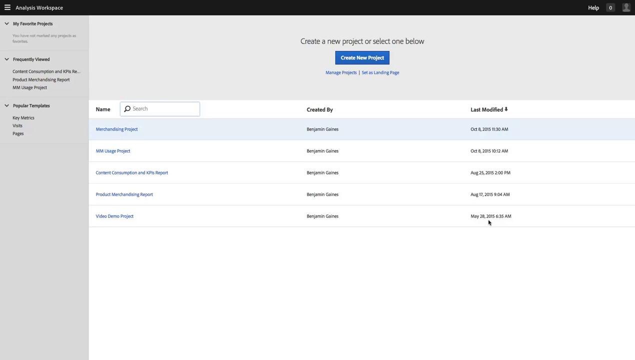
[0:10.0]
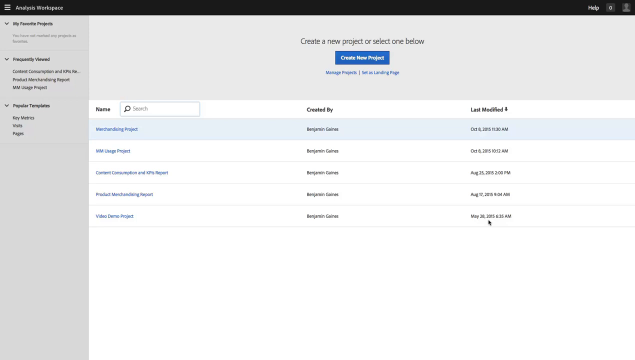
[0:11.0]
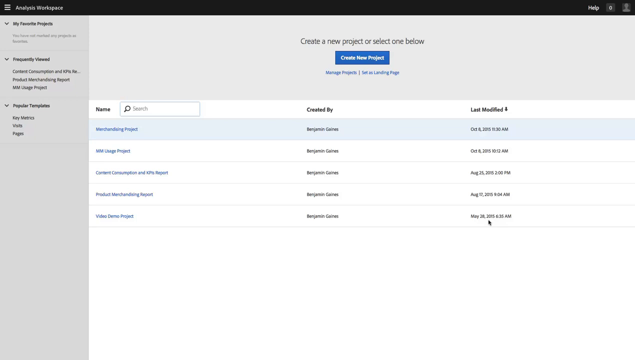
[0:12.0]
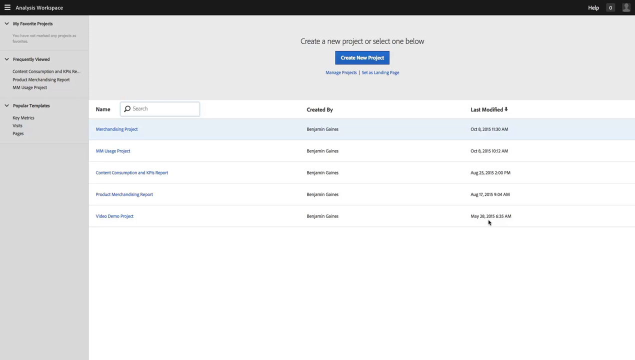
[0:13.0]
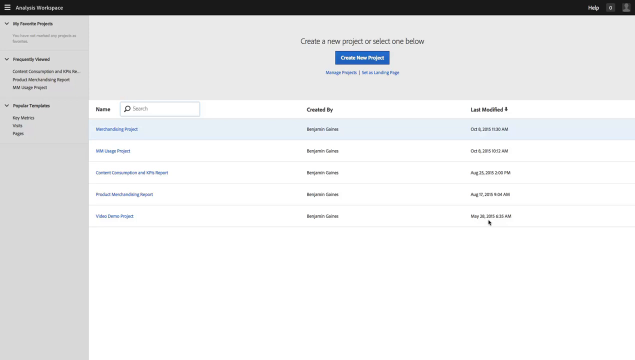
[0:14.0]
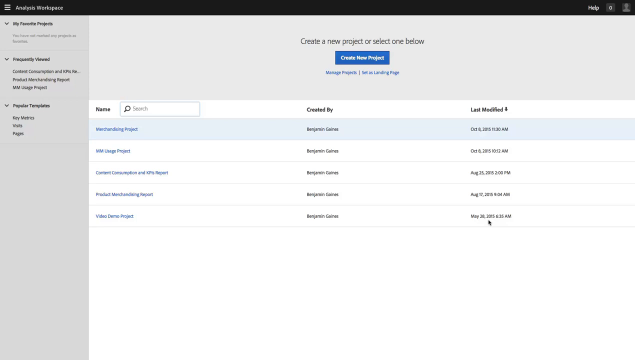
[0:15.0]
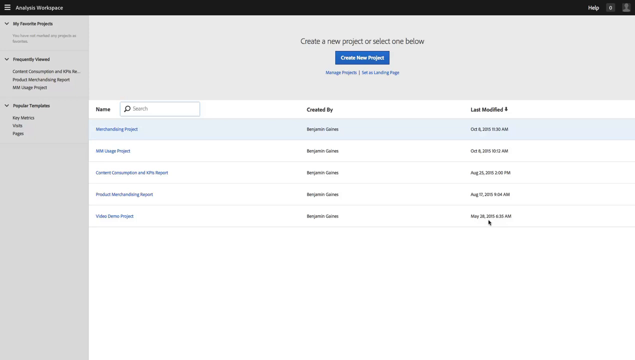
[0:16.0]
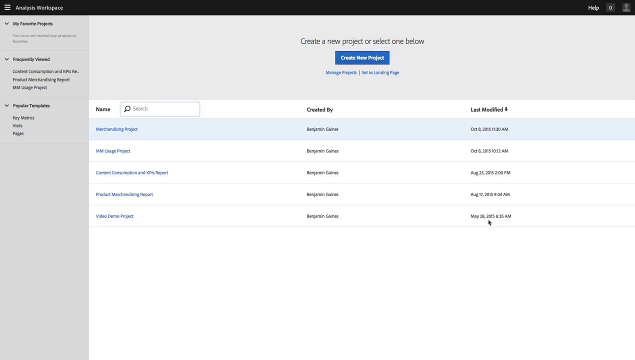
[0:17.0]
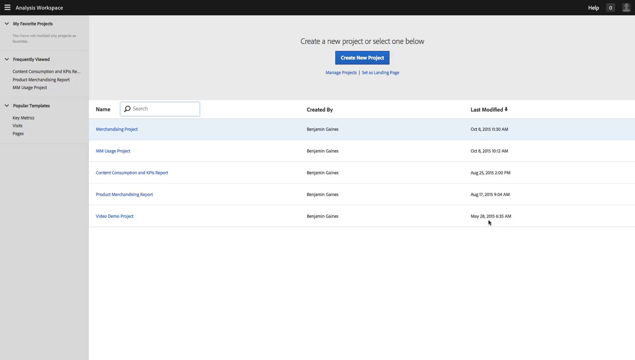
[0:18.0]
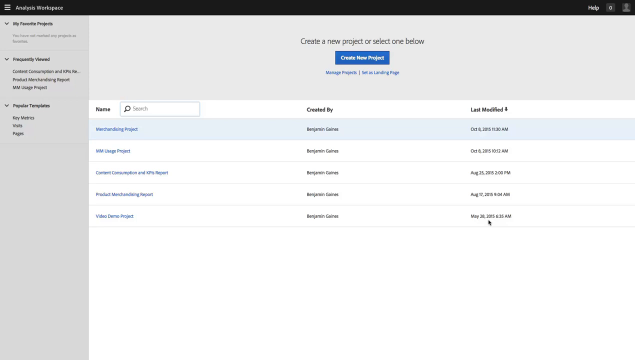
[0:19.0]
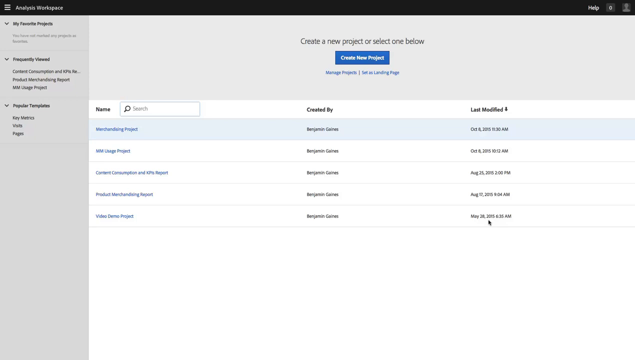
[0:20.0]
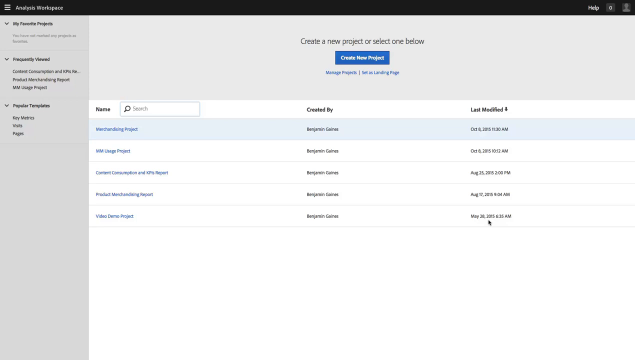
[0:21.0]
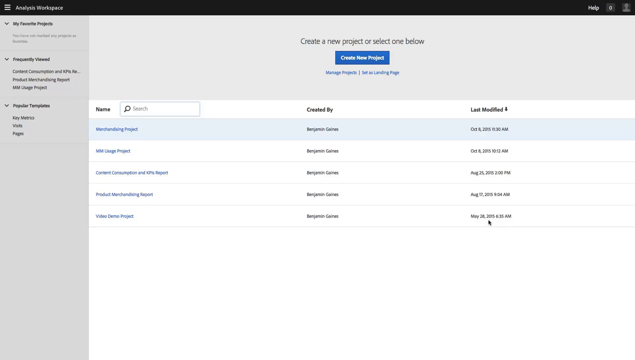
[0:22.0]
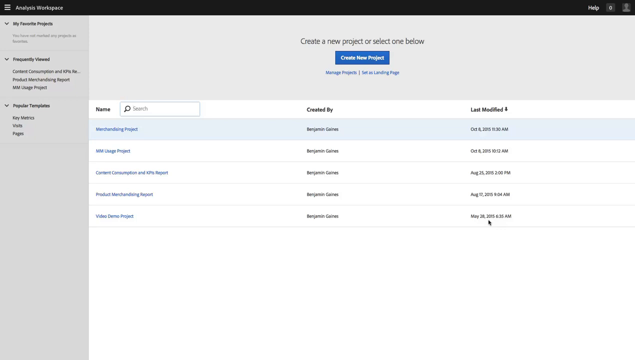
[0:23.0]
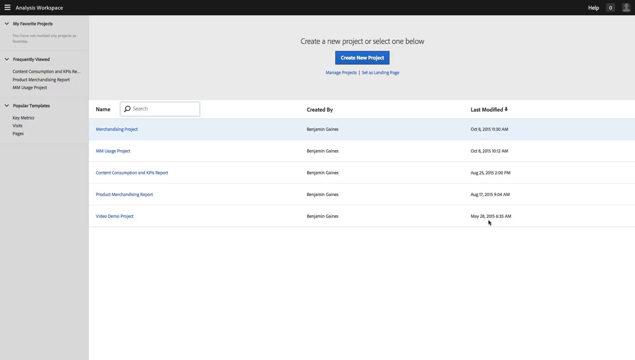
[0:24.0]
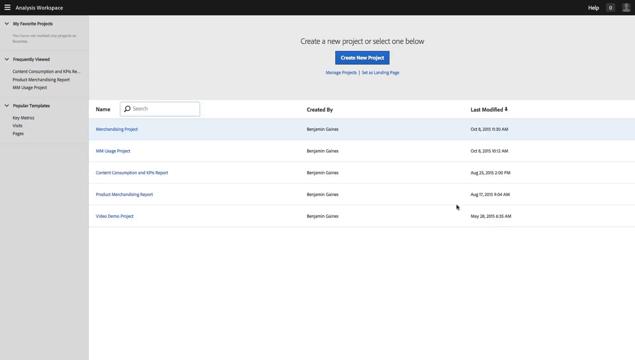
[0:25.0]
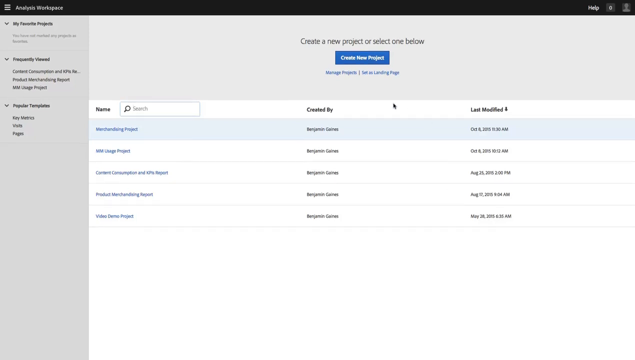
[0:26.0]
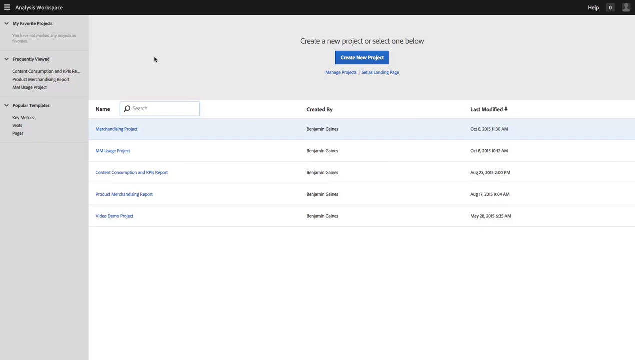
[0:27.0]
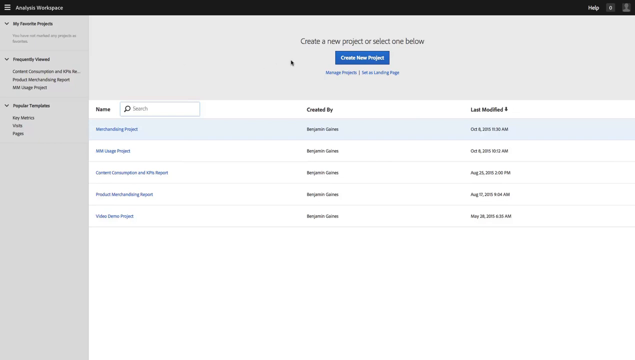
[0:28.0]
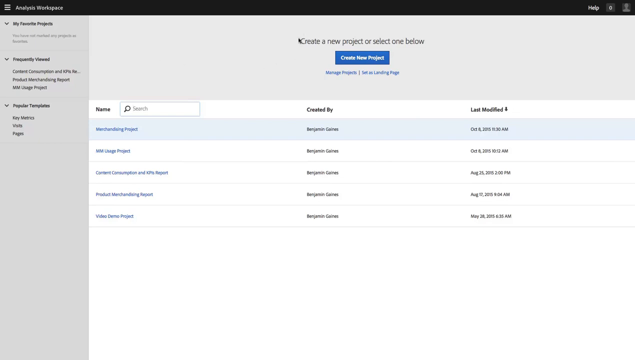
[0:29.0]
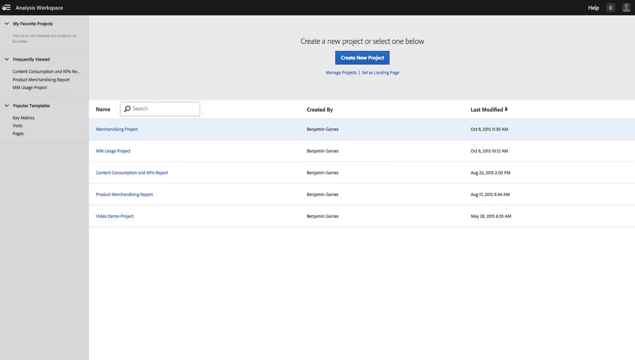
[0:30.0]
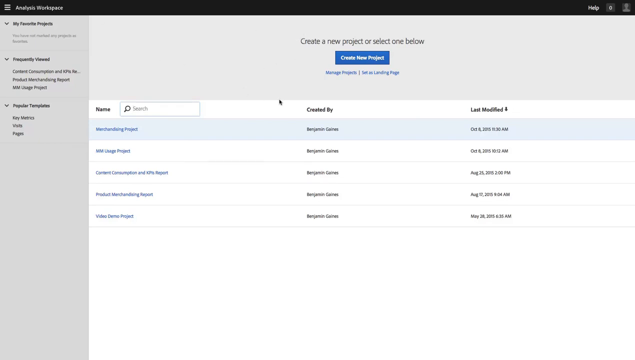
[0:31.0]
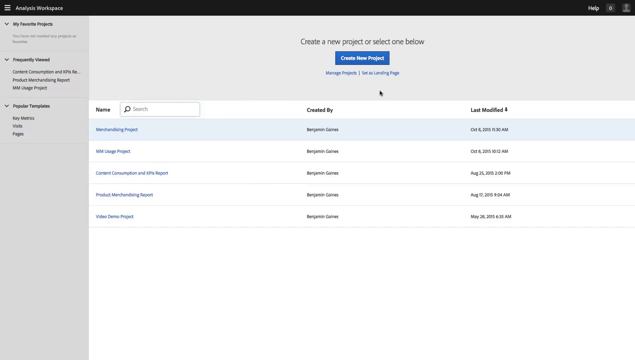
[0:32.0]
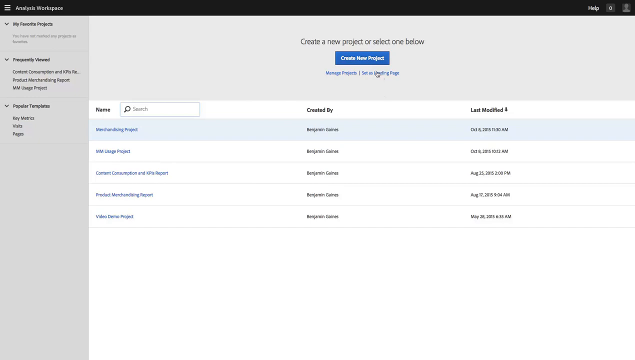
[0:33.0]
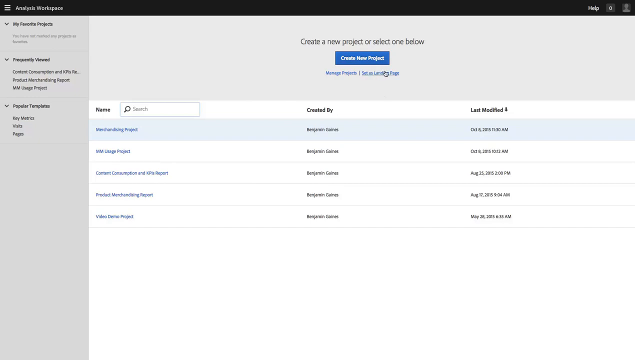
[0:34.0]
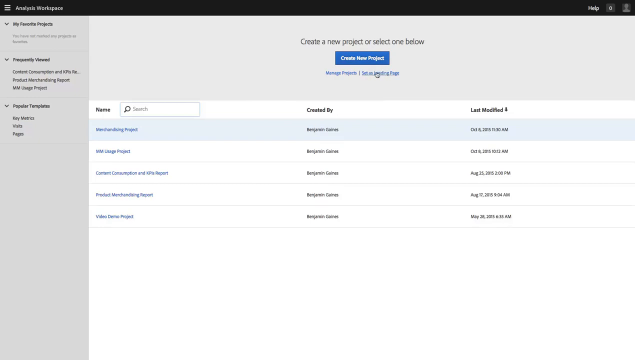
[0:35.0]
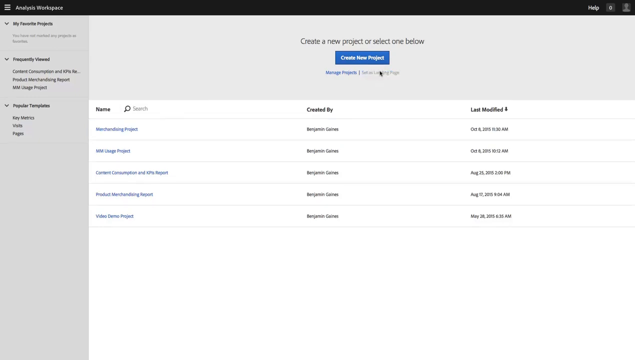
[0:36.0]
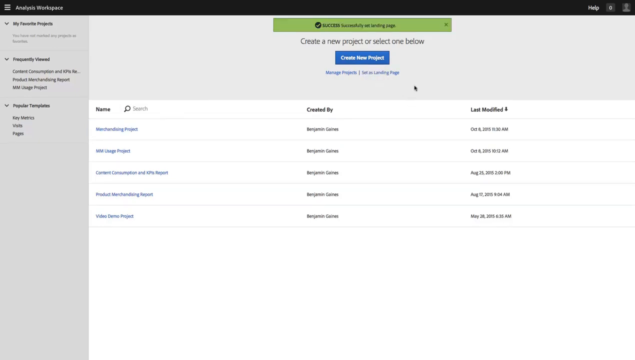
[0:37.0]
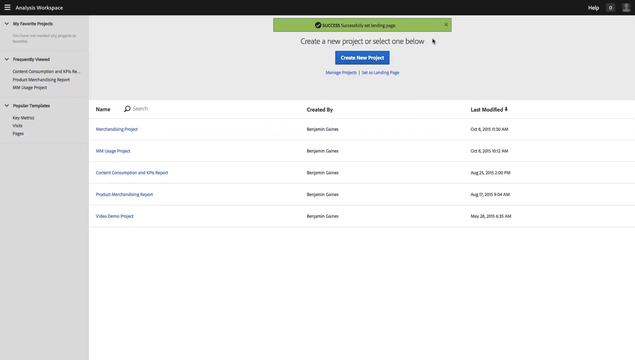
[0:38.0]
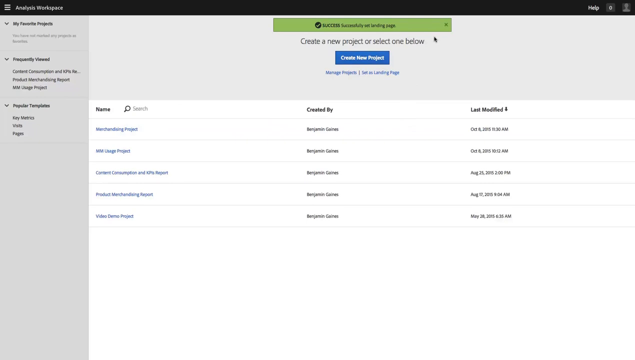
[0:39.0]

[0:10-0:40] The Analysis Workplace application window remains on screen. The text cursor keeps blinking in the search bar above the project names, and the mouse pointer stays directly below the last project's modified date. After several seconds the pointer begins to move diagonally up and to the left, toward the middle of the screen, past the last modified and created by headings, up to the upper-left area above the names. It hovers around the "Create a New Project" button, goes up to the top left where the "Analysis Workplace" title is, then comes back to the upper center and hovers over a link below the "Create New Project" button that says "Set as Landing Page." After hovering there for a few seconds, it clicks the link, and "Successfully Set Landing Page" appears in a small green bar above the new project title before fading away.